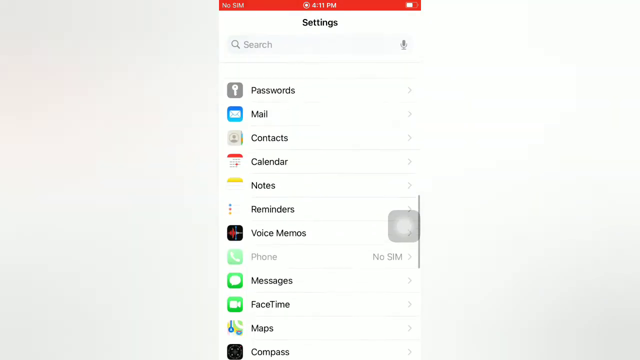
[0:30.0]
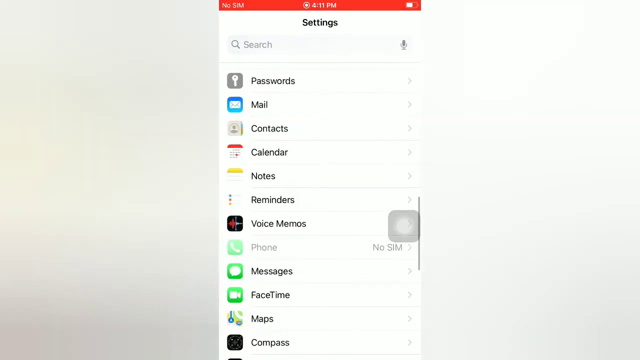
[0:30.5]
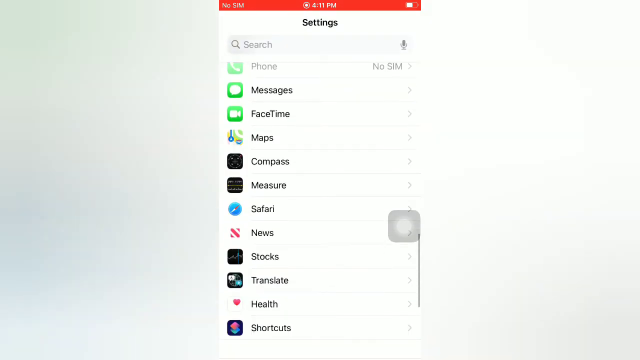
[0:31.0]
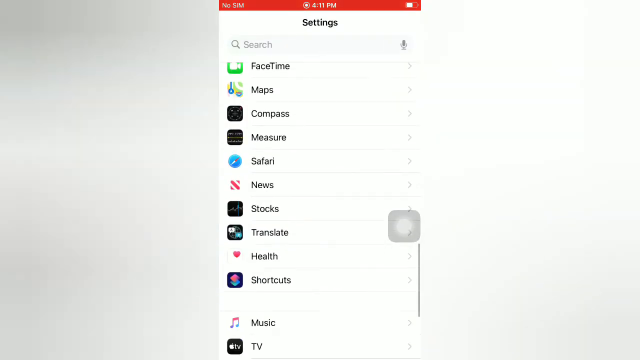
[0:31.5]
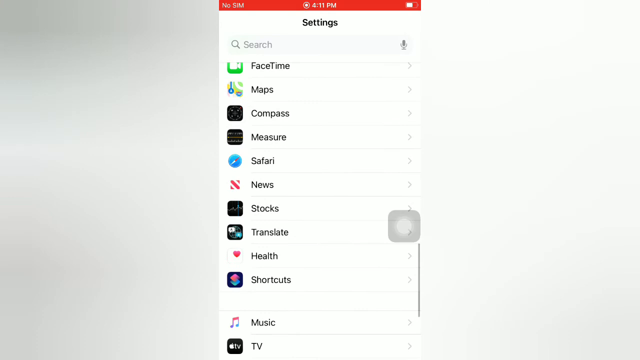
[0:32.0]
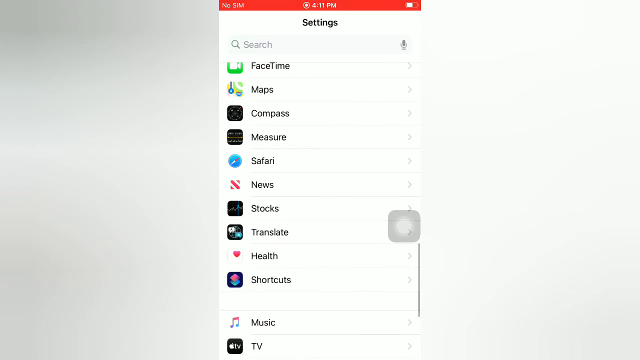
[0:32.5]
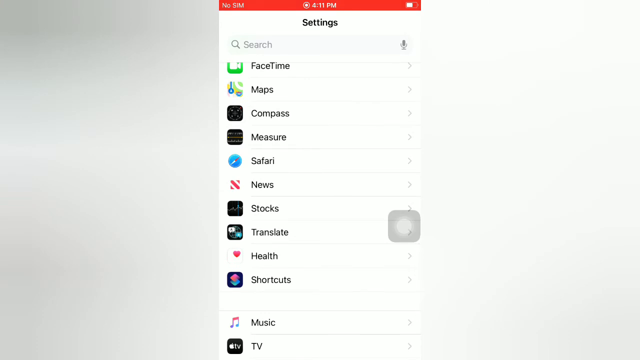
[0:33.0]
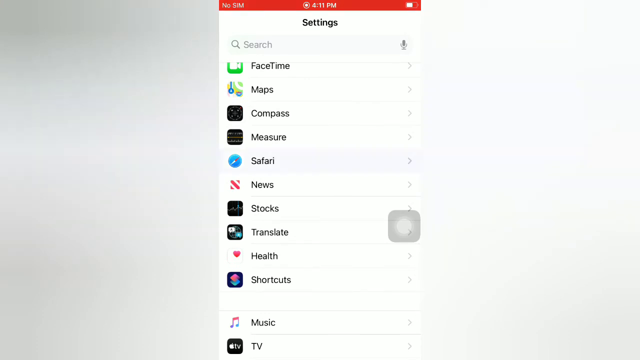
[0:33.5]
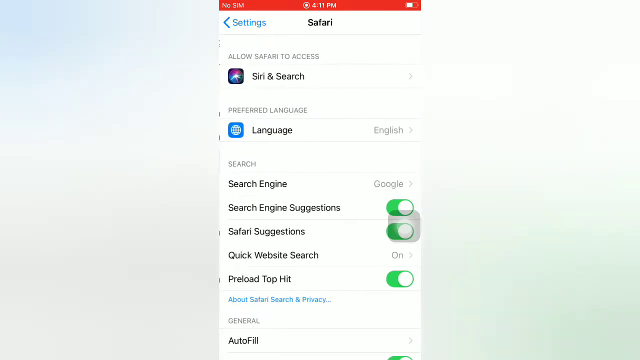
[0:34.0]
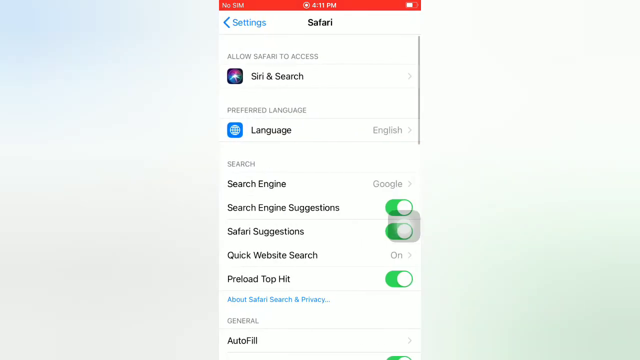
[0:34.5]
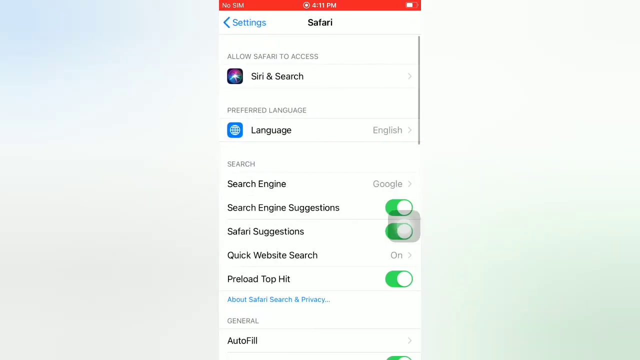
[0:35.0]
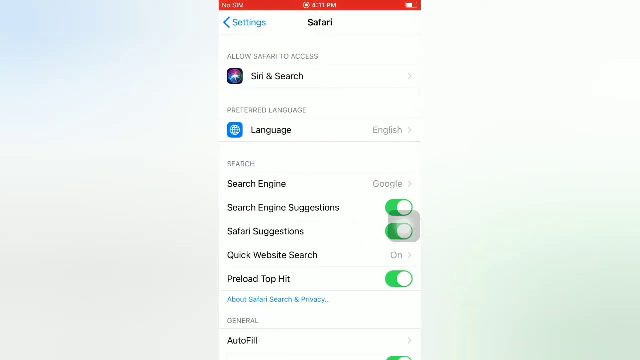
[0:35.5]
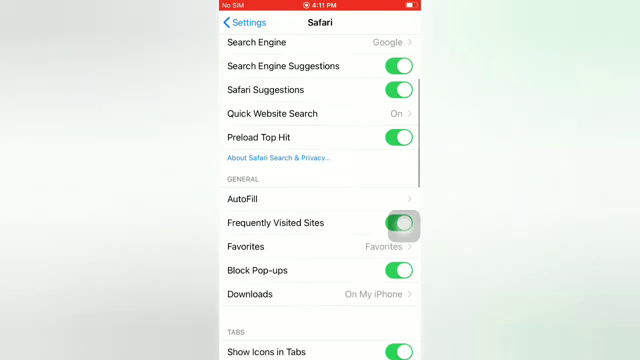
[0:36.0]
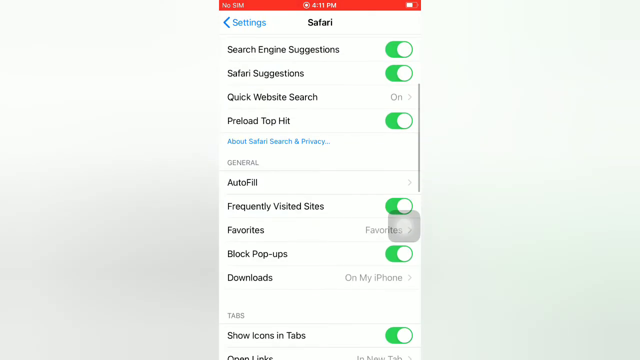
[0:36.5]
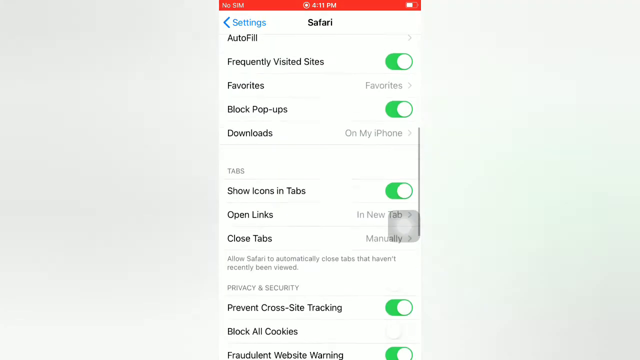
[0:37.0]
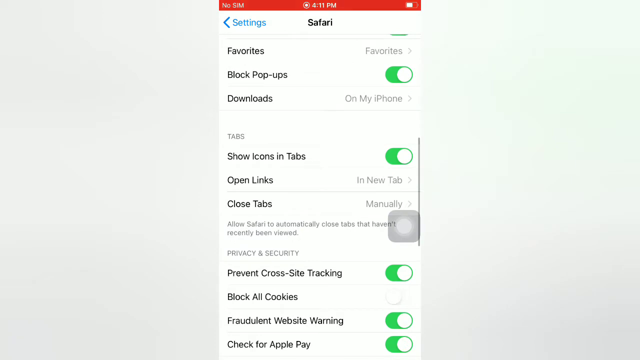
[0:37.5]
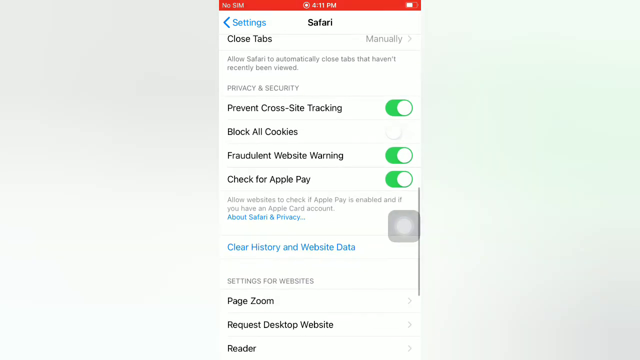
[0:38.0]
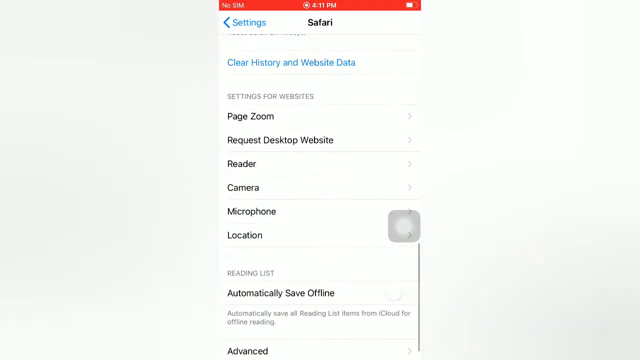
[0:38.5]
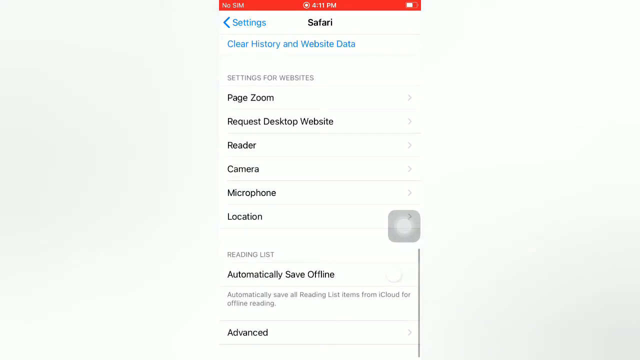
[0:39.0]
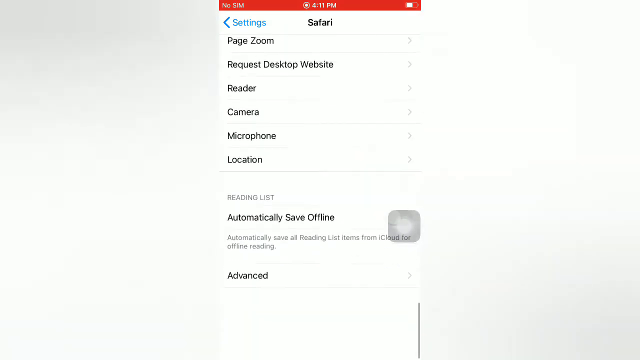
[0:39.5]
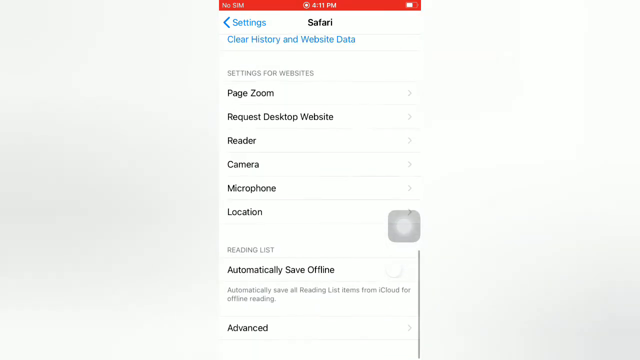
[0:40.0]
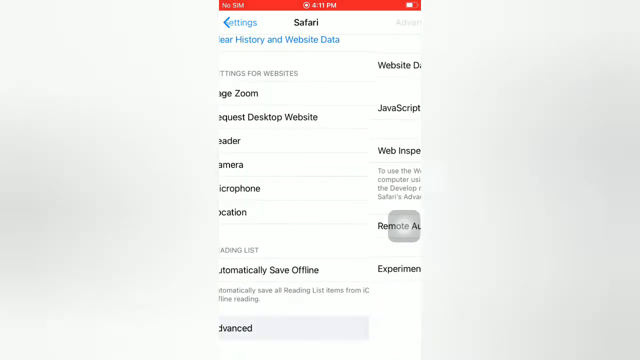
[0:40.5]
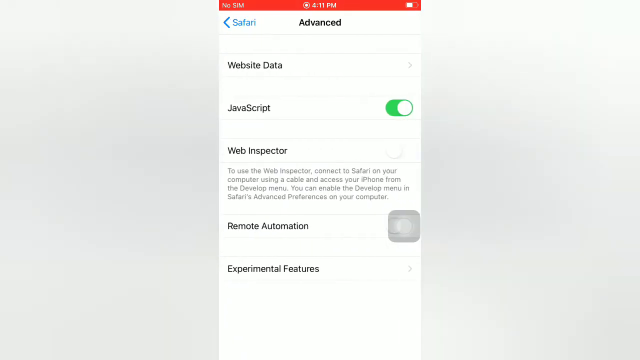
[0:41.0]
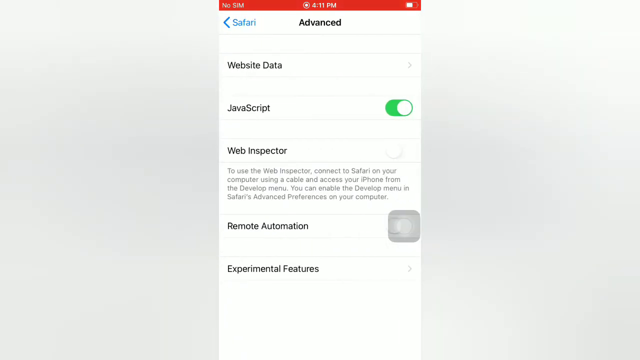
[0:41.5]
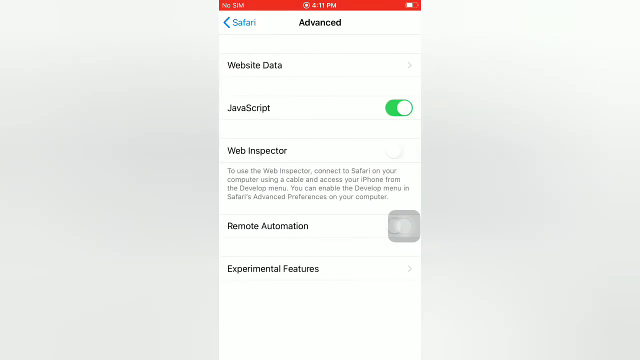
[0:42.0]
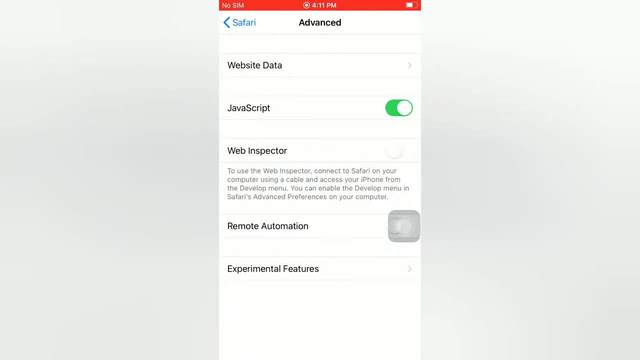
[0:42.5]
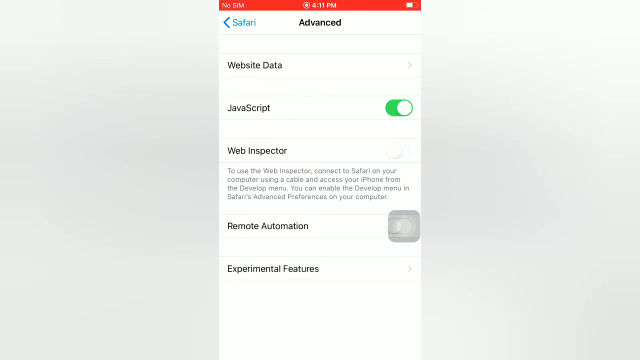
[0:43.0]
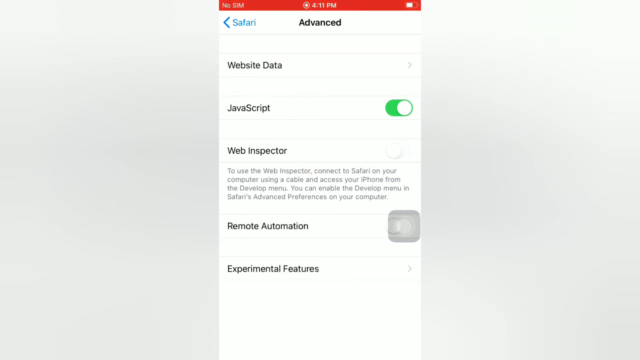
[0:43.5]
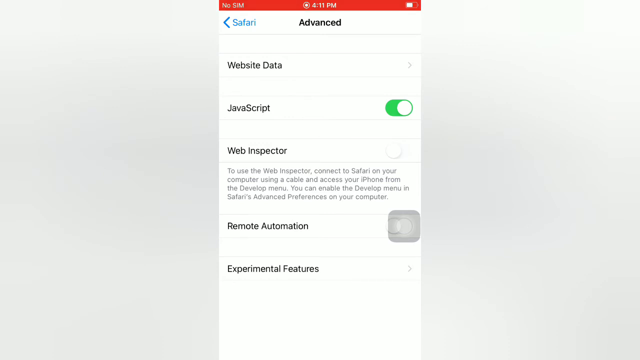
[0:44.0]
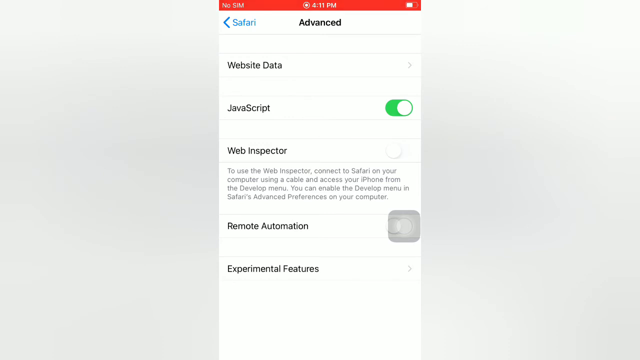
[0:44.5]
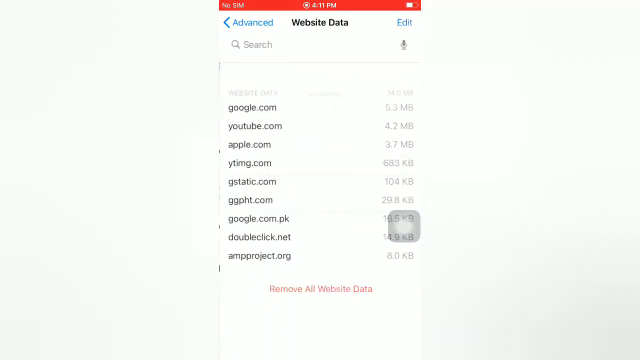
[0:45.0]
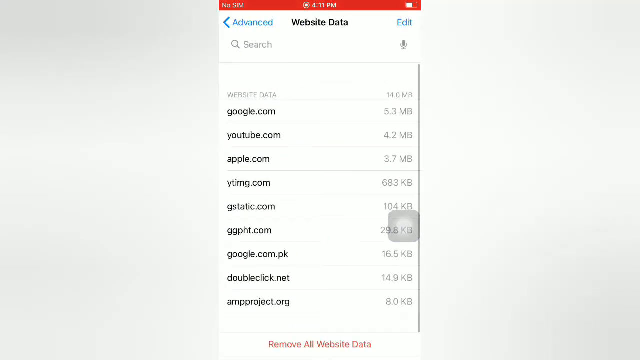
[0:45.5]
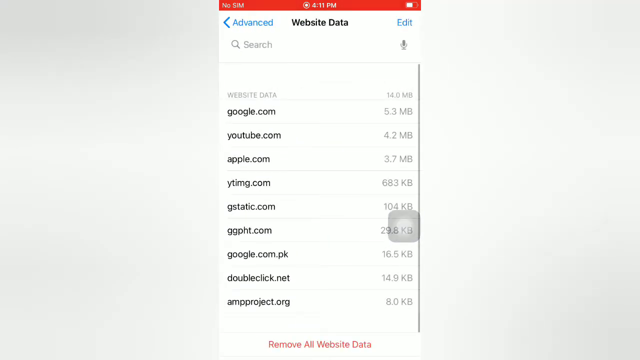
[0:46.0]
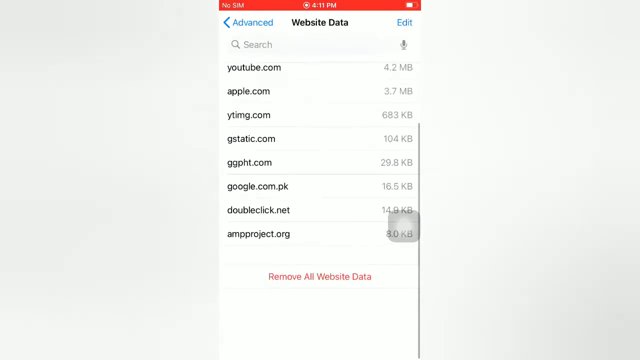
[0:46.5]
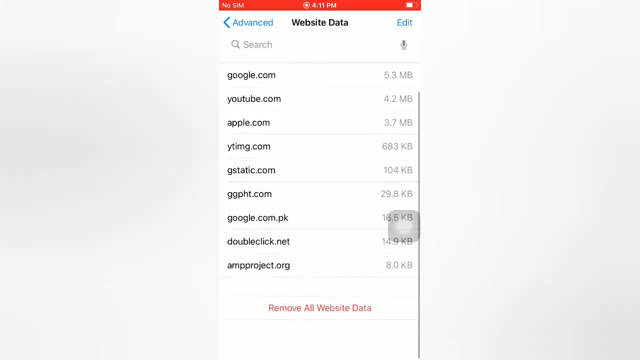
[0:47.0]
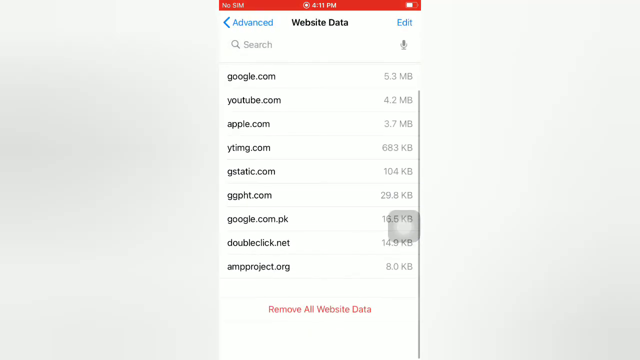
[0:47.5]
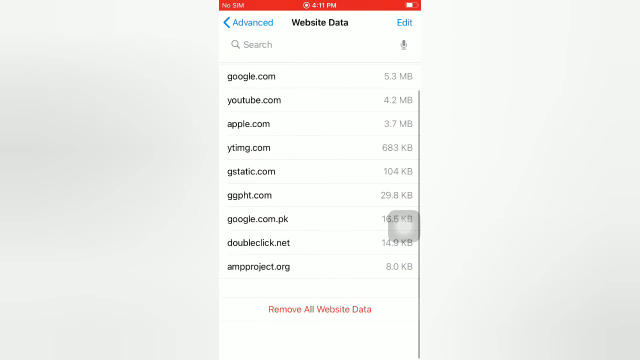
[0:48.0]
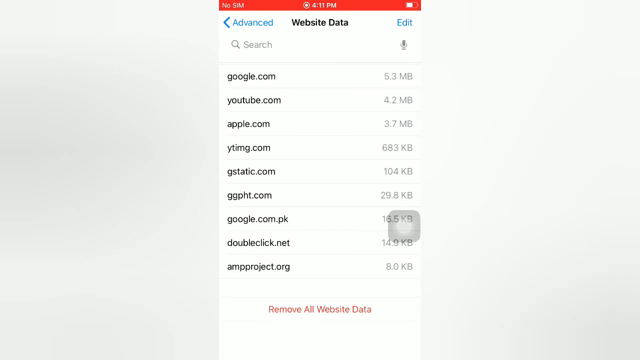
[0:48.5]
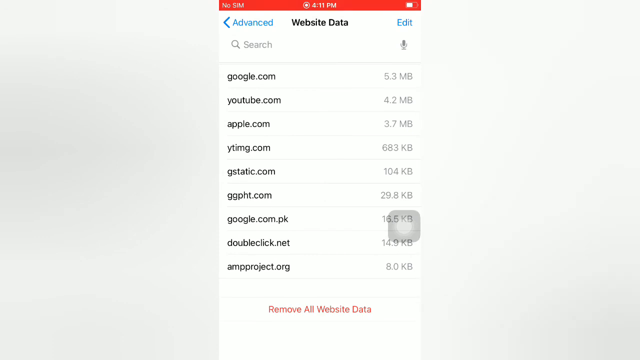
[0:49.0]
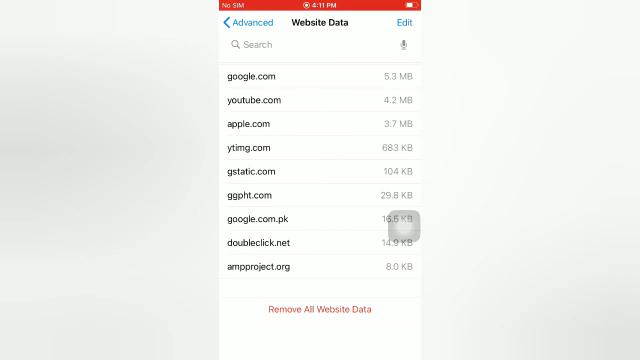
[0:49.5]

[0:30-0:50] Settings is open on an iPhone screen, and the settings page is scrolled downwards towards the end, where the safari option is clicked. The safari page has various options such as search engine suggestions and safari suggestions, with green toggle buttons. Other options in the advanced page include javascript with a toggle button, website inspector with a paragraph written below it, remote automation and experimental features. The Safari page is scrolled downwards again towards the end, then moves slightly back up, indicating overscroll. The advanced option is selected, website data is clicked, and remove all website data is selected. The website data lists data from Google, YouTube, Apple and others, with the MB and KB taken by each website shown to the right. A search bar is at the top of the website data page, with a microphone icon to its right.